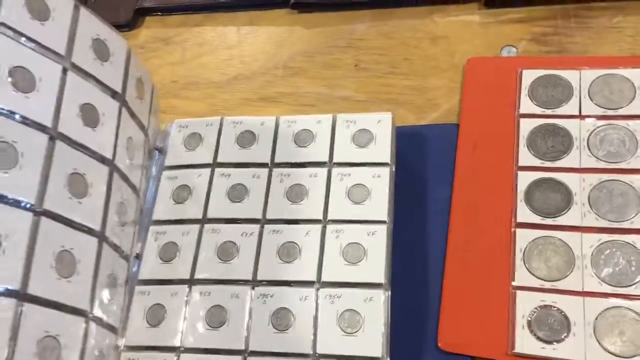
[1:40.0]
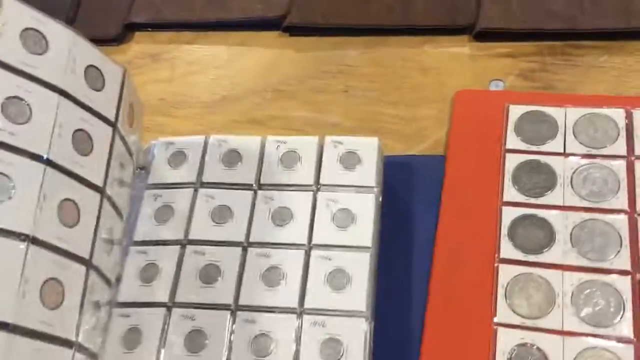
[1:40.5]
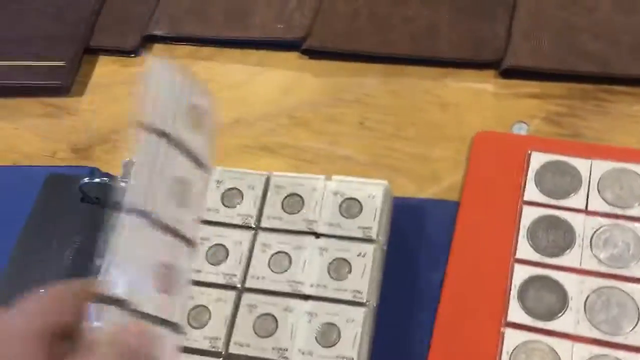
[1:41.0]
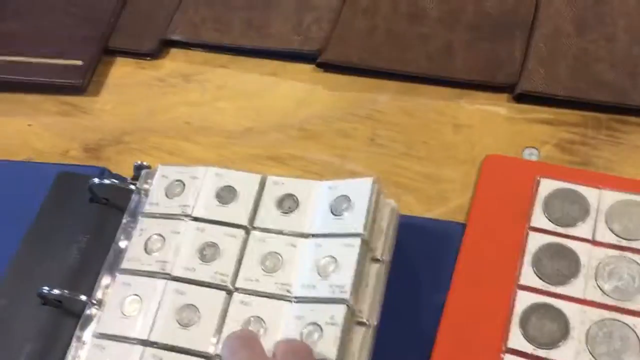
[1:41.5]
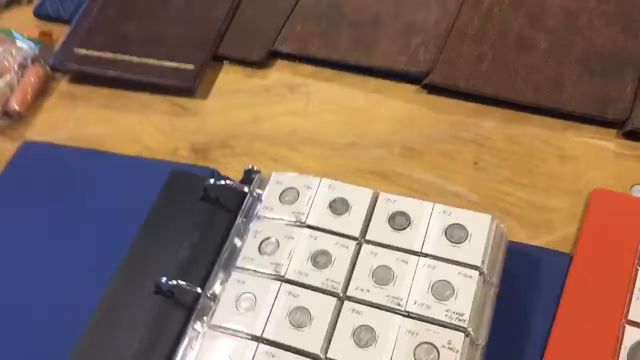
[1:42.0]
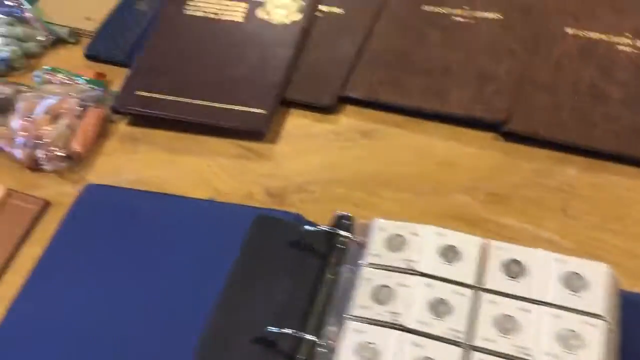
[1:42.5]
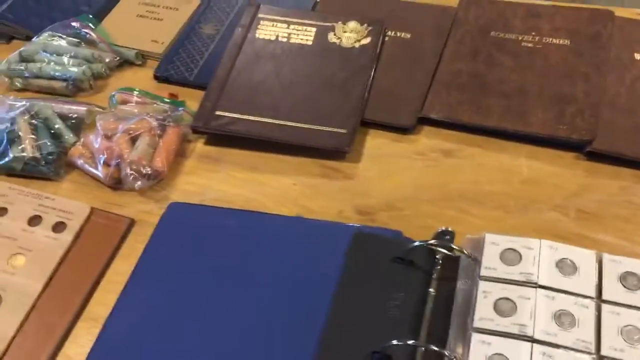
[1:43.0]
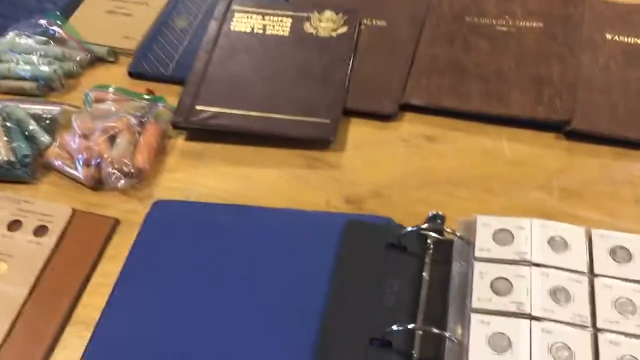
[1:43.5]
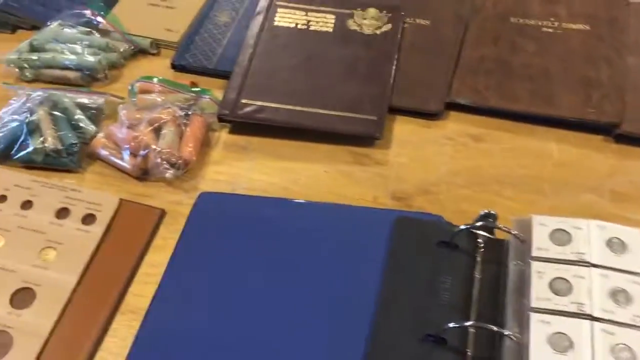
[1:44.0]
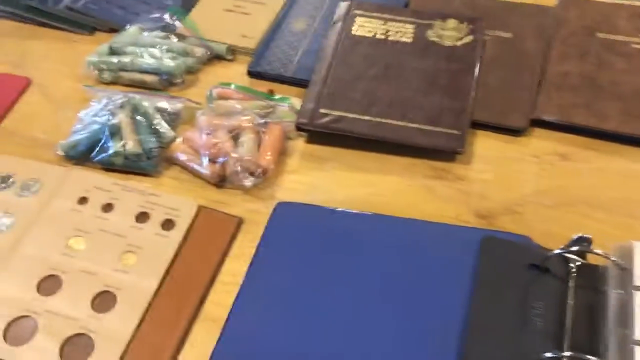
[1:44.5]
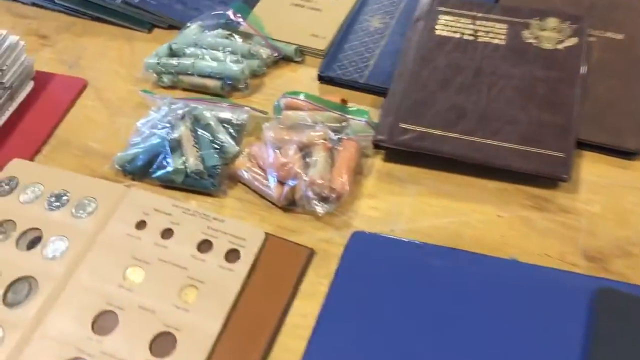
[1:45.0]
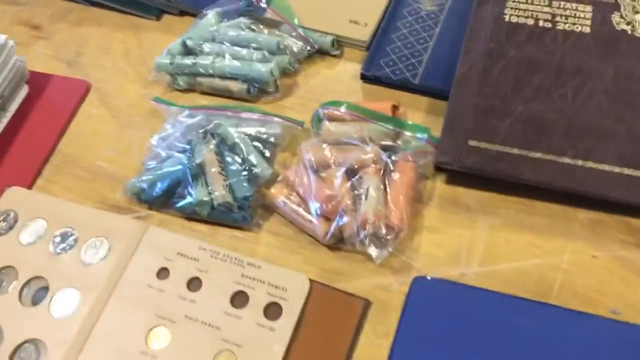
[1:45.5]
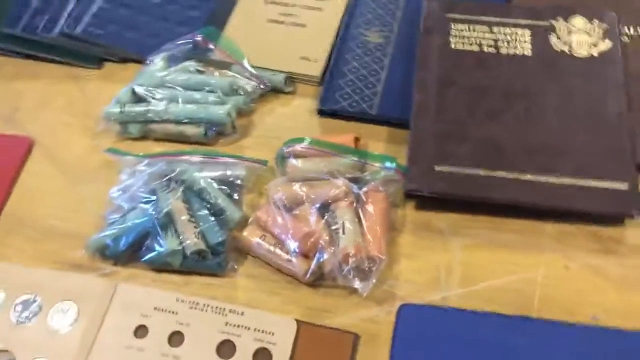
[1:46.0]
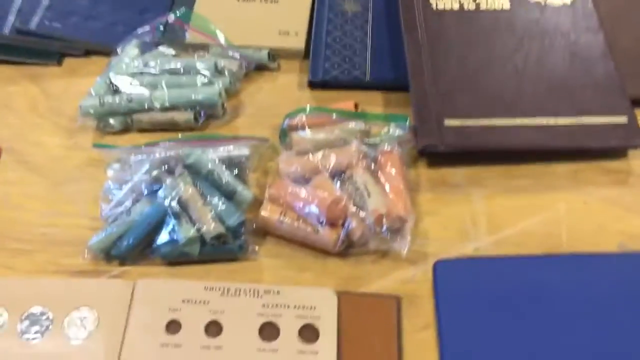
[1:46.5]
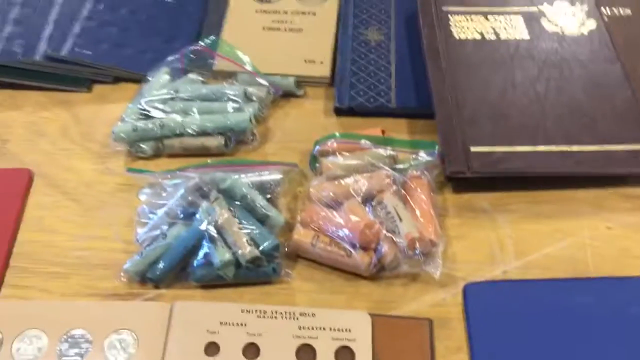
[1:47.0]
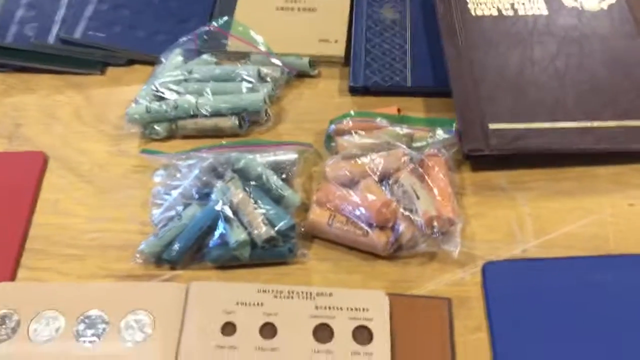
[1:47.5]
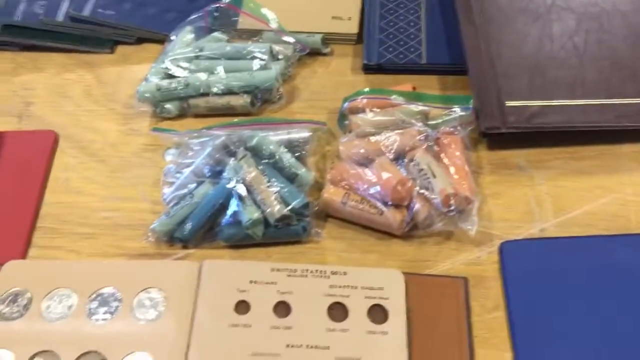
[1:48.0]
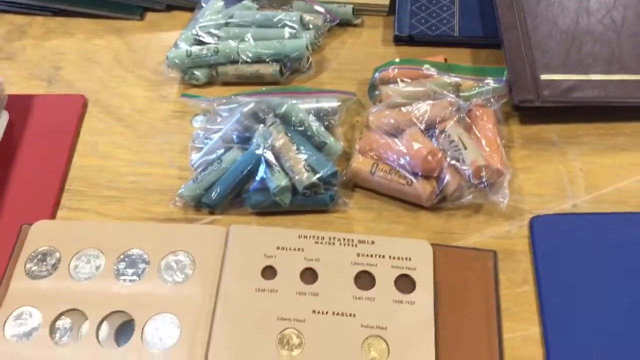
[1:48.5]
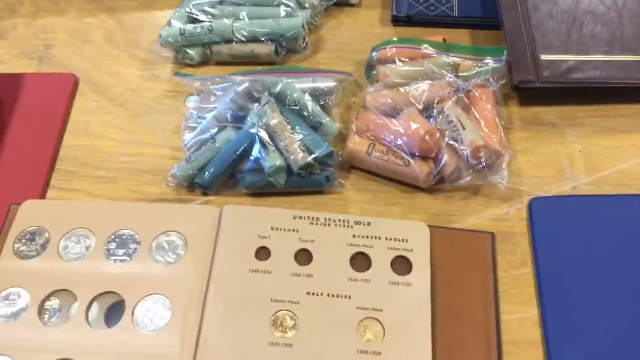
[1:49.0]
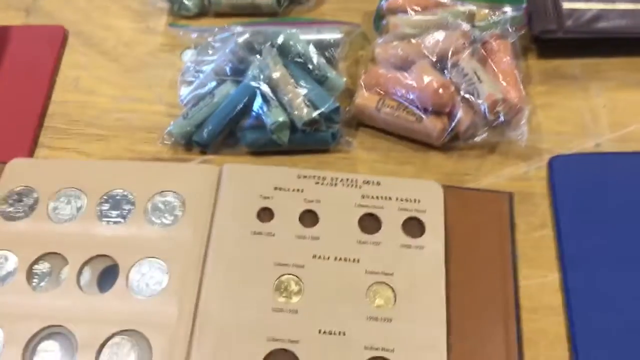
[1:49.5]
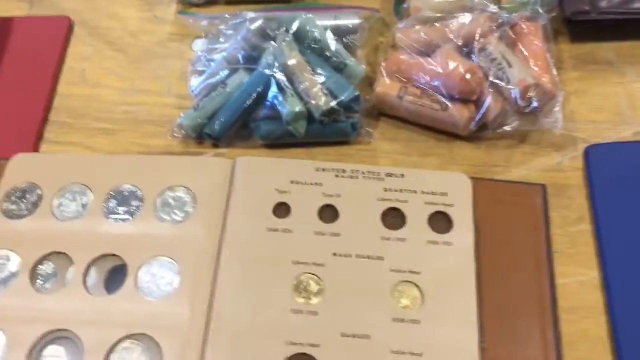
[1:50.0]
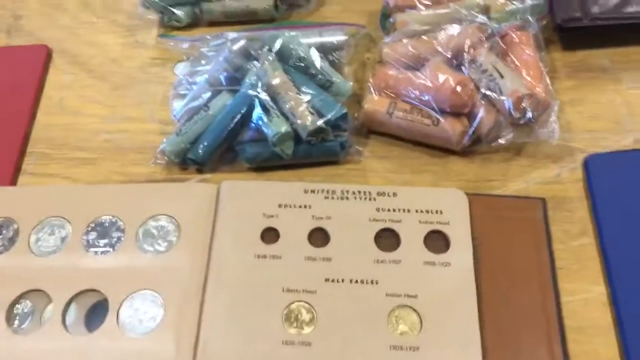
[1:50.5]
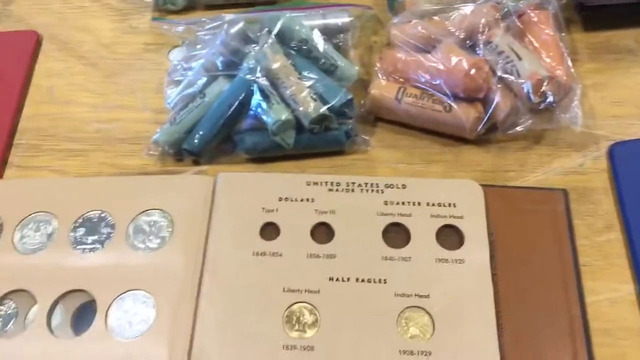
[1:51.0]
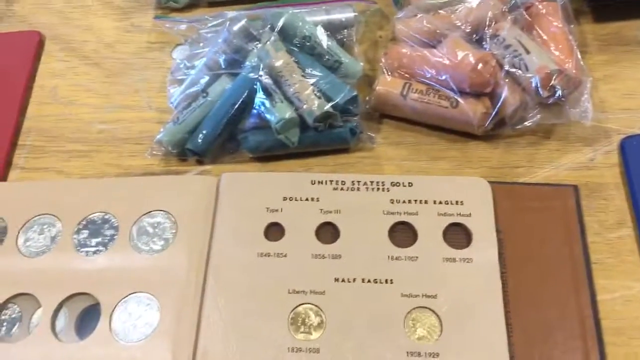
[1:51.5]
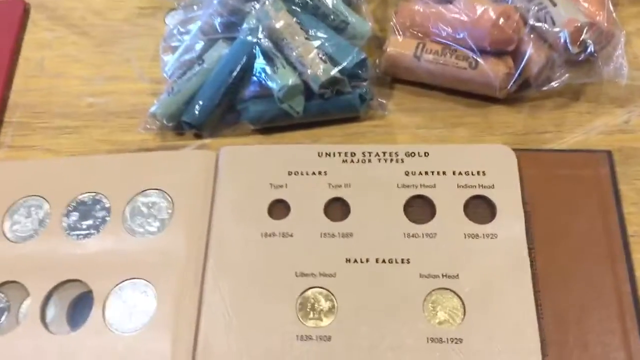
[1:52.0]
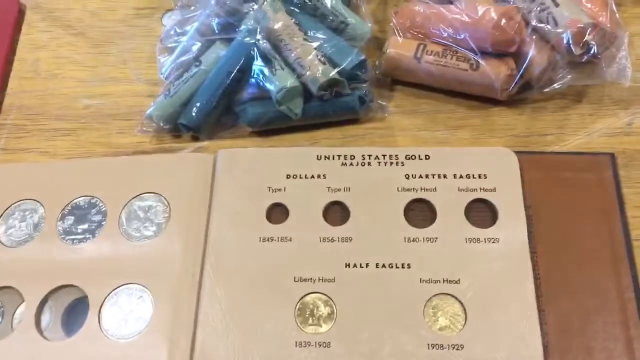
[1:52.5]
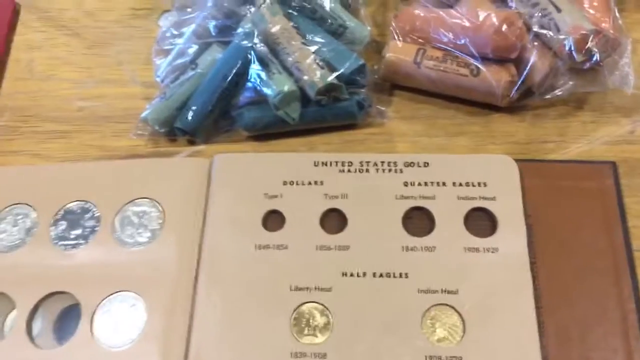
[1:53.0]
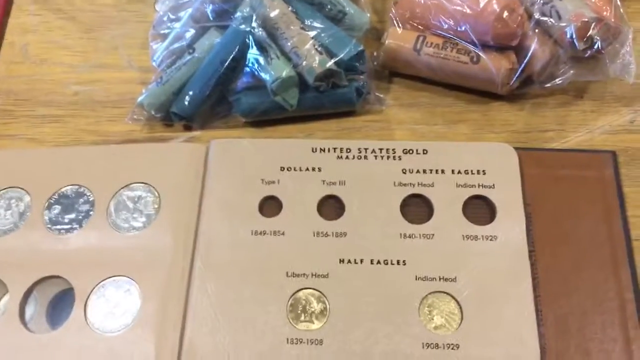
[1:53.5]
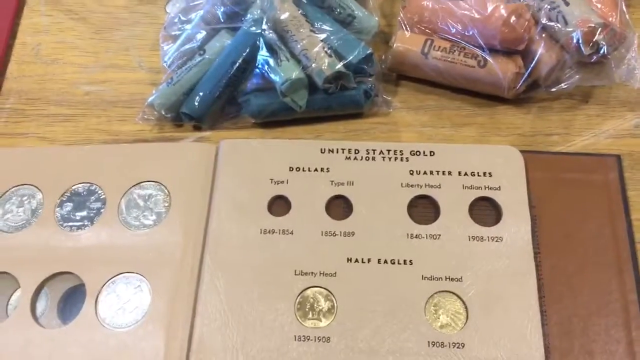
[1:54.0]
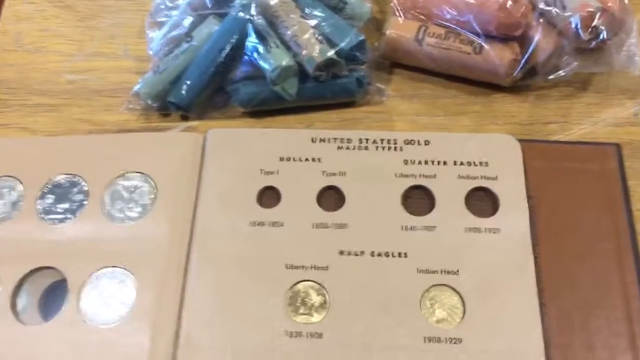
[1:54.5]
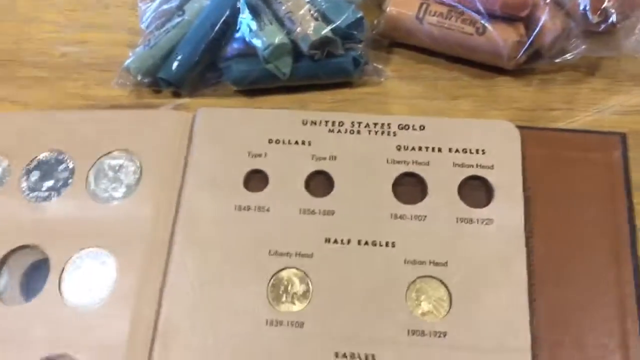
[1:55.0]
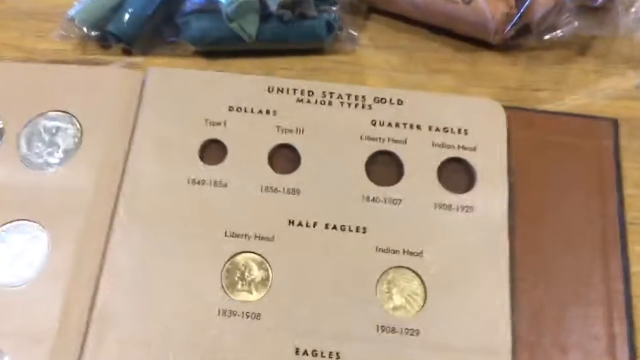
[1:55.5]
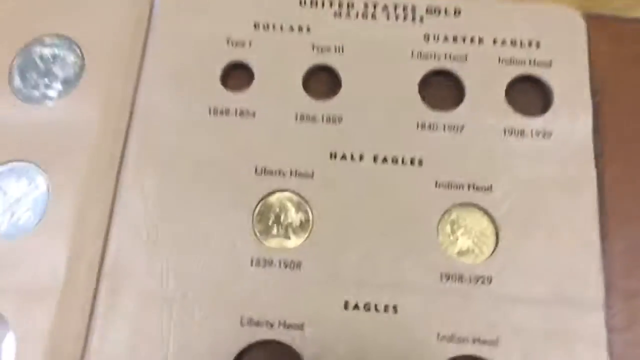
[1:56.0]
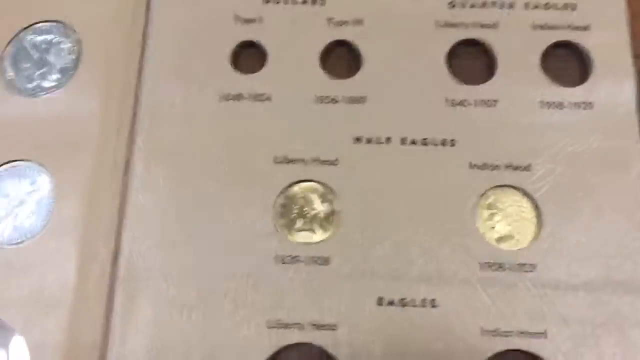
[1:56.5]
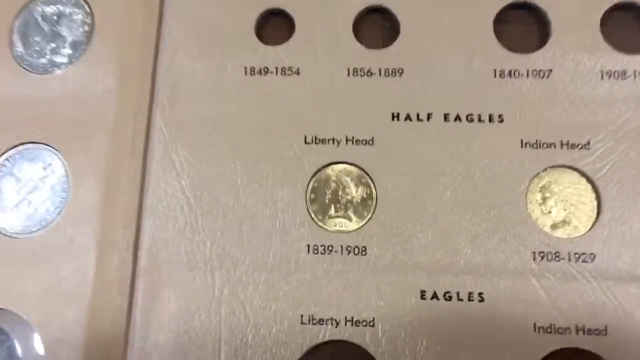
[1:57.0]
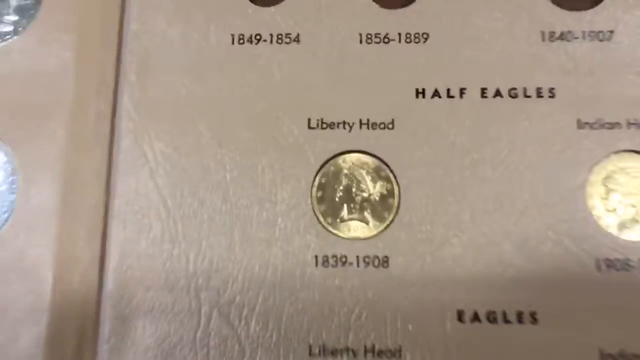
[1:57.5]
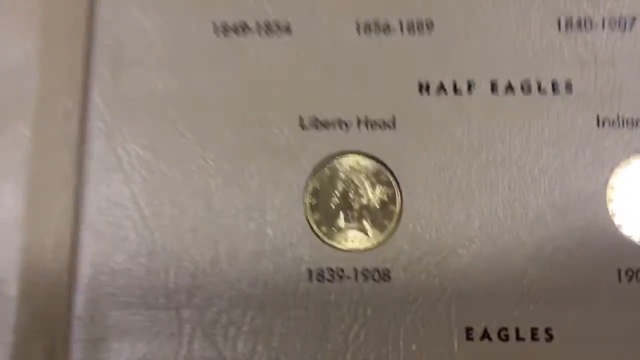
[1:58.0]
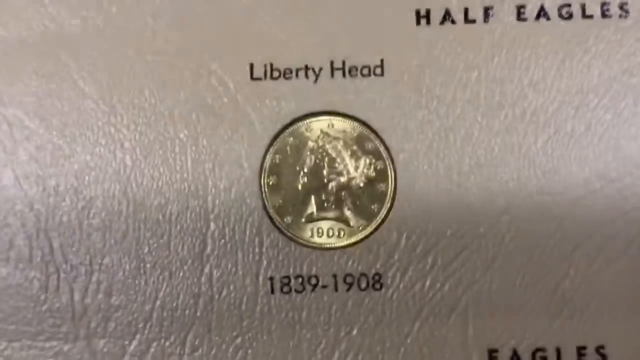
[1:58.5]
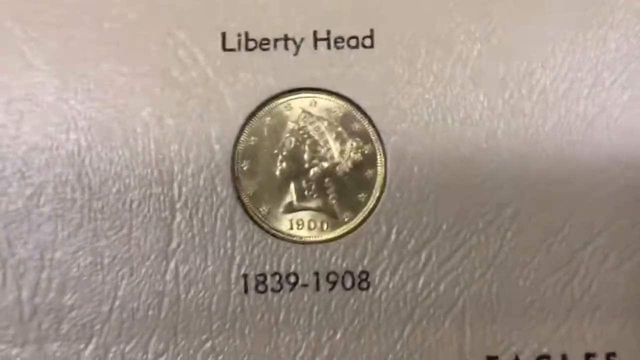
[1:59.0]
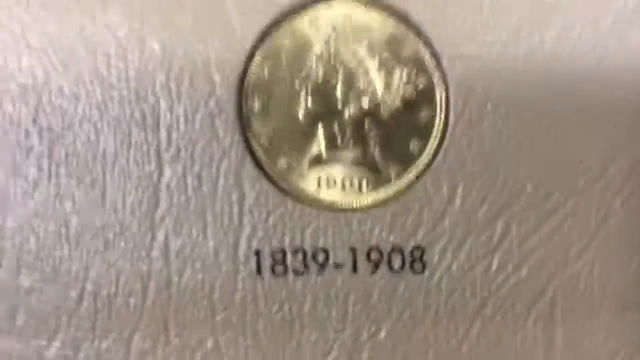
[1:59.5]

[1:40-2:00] A brown table is lit by a light; it seems the electricity is on or it is nighttime. On top of the table, many closed files are in a line, and some files are open. Silver coins are visible, along with items in plastic that seem to be lipstick or something used to color or paint the coins. Another file, peach in color, shows gold coins. Someone keeps flipping through the file of coins. There are many files: maroon, brown and blue. Text on the coins includes "1839-1908" and "Indian".